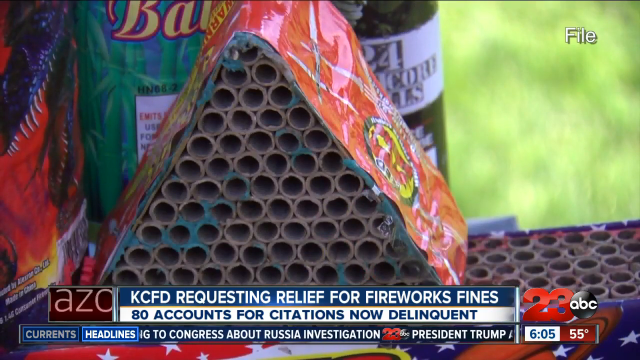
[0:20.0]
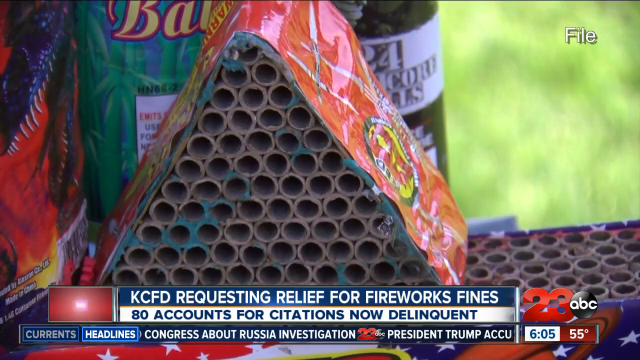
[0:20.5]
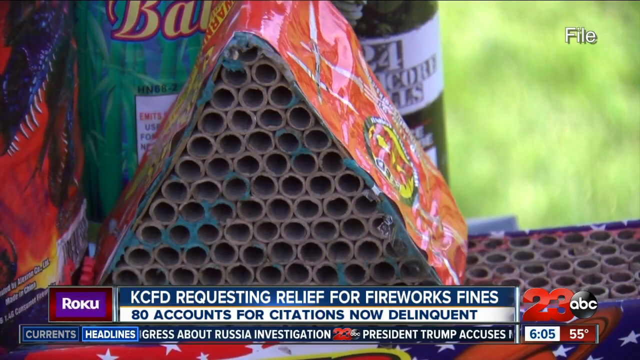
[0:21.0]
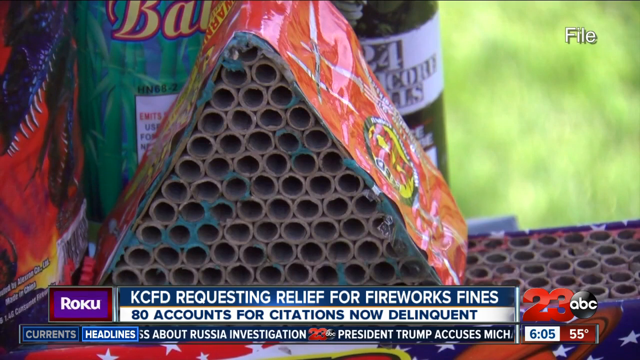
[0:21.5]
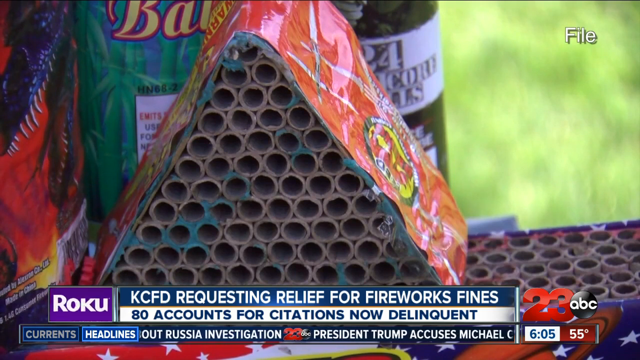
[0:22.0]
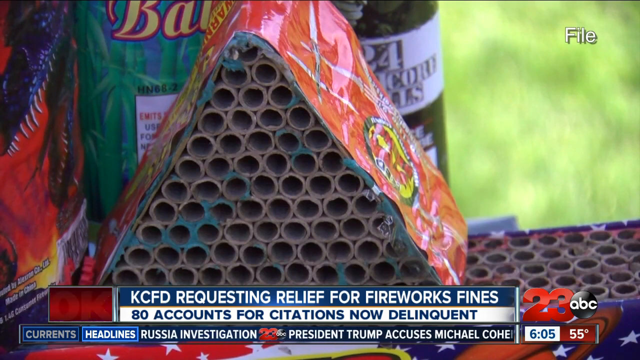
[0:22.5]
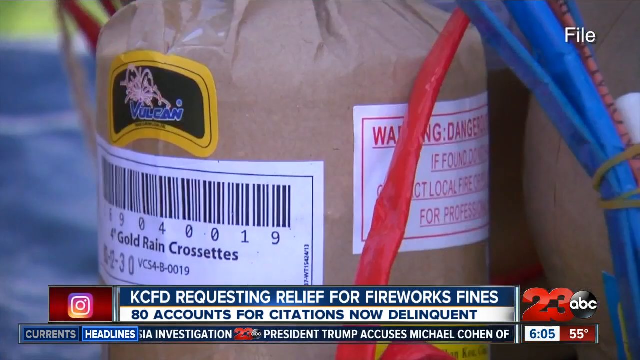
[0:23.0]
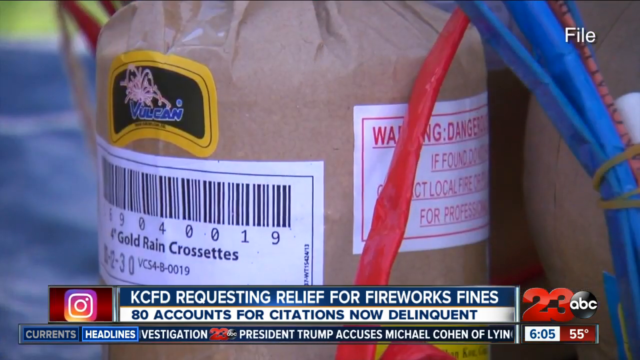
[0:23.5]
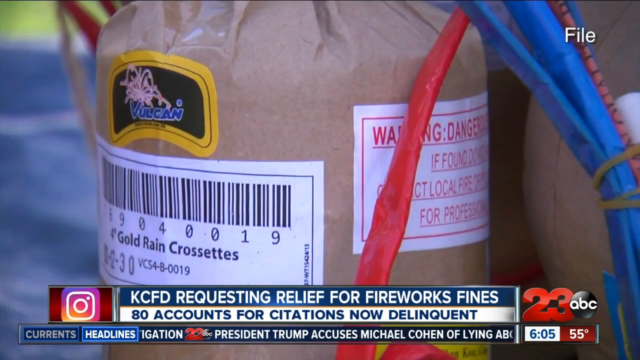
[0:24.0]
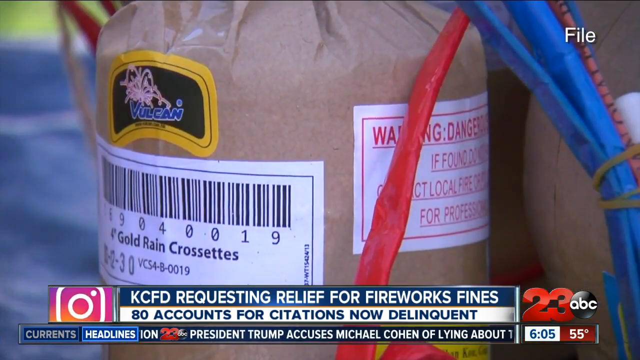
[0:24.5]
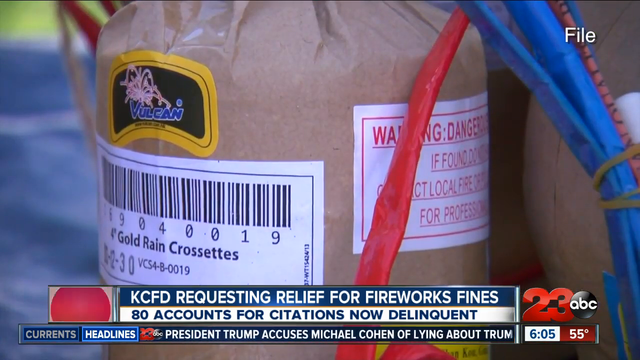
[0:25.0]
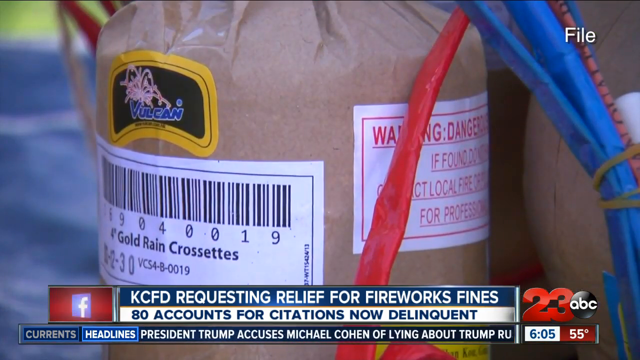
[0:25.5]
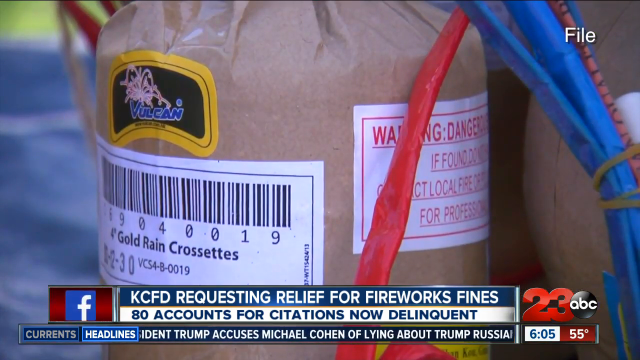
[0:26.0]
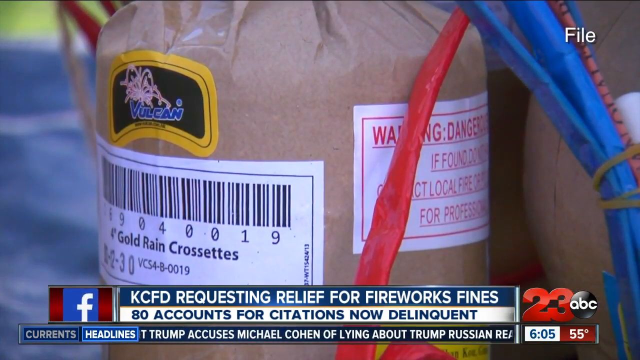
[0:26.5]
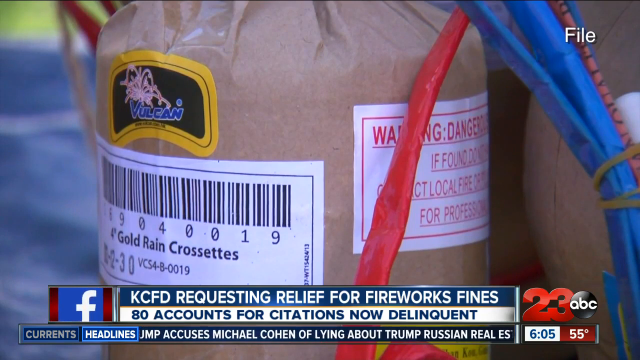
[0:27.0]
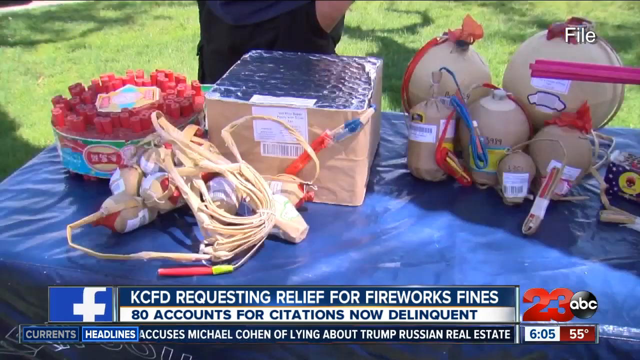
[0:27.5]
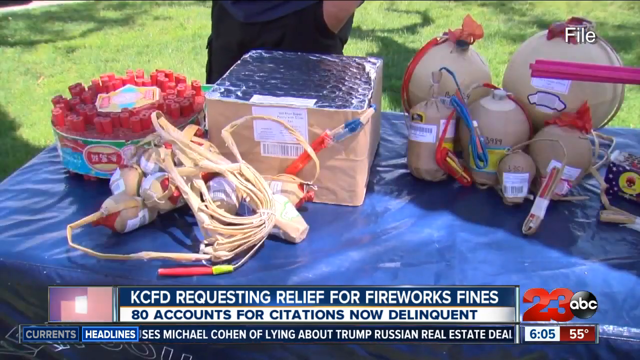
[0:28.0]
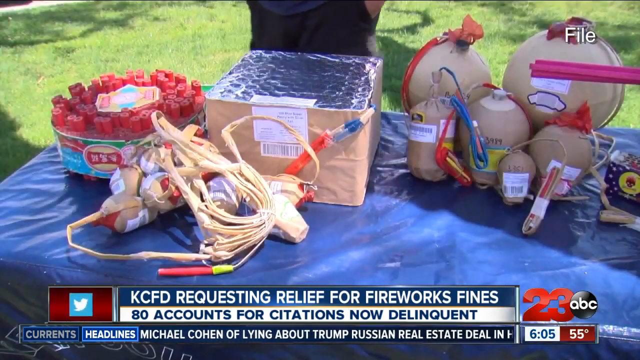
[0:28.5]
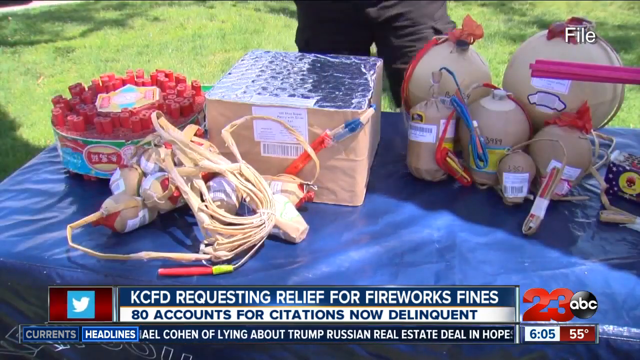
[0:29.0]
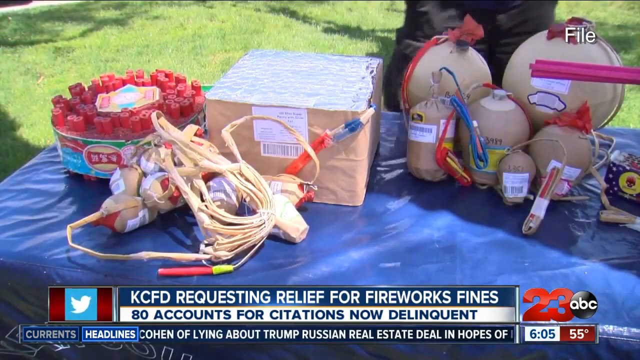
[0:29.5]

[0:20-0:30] The news segment from ABC 23 Bakersfield concerns a request for relief for firework fines, with 80 counts of citations now delinquent.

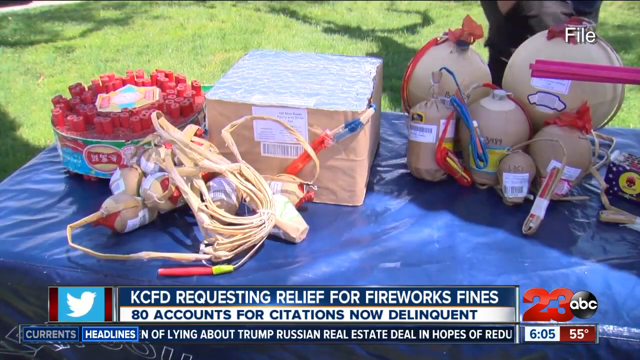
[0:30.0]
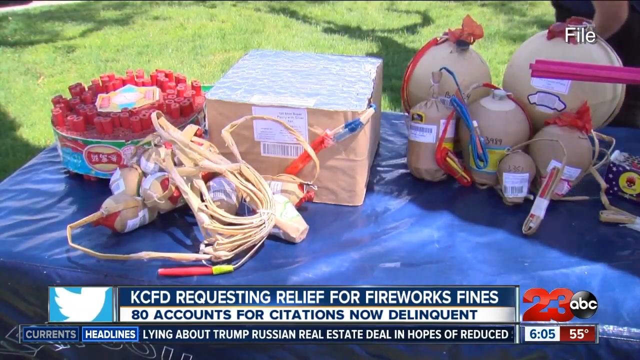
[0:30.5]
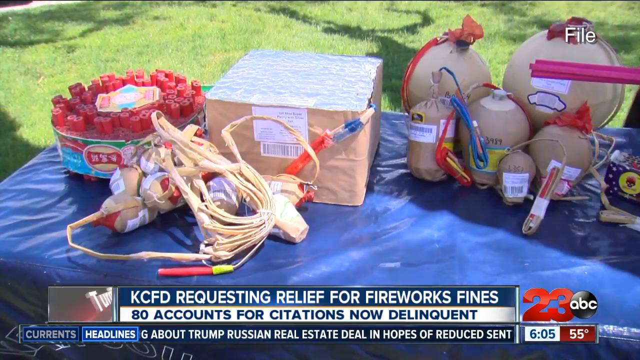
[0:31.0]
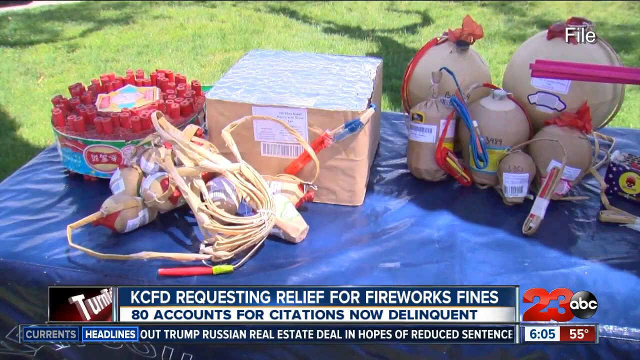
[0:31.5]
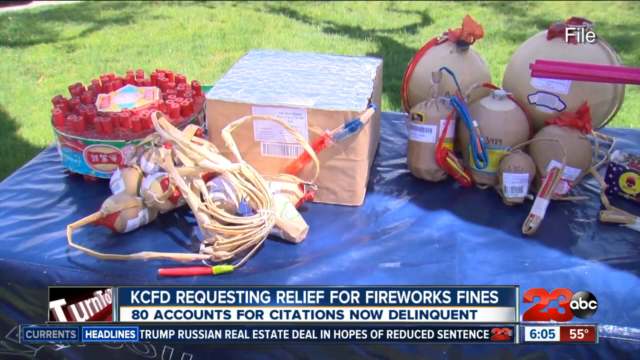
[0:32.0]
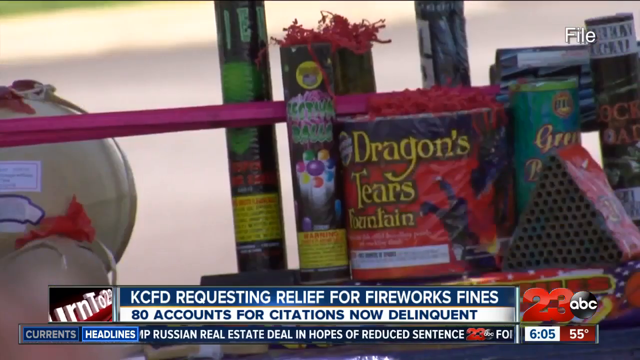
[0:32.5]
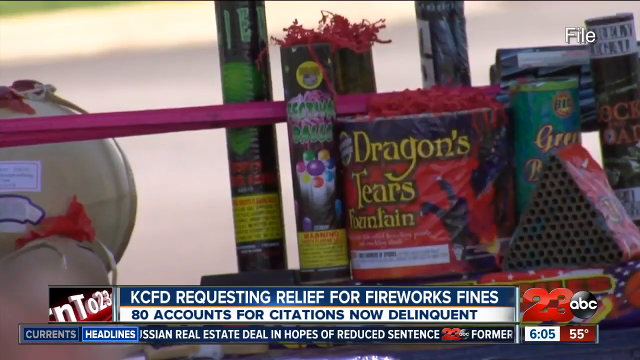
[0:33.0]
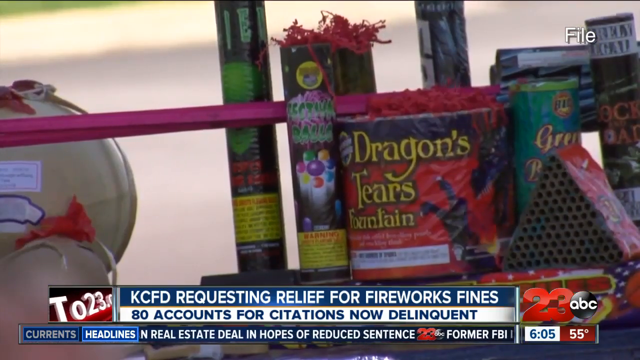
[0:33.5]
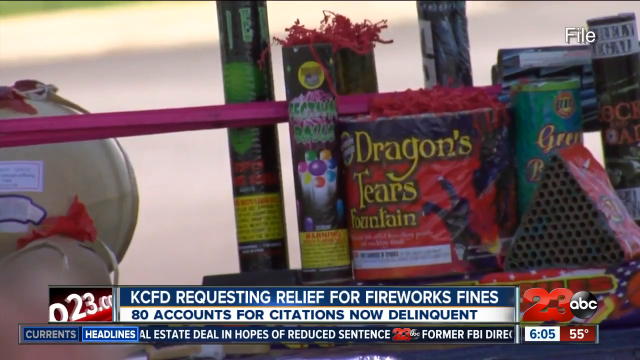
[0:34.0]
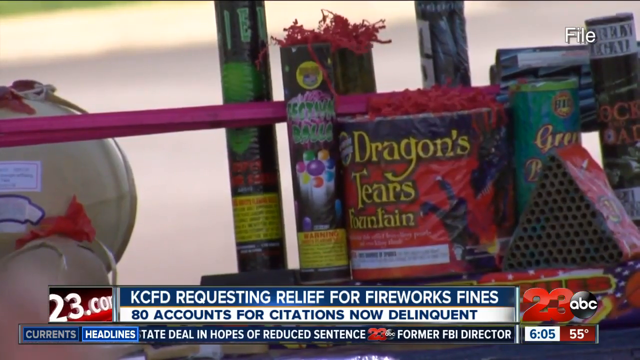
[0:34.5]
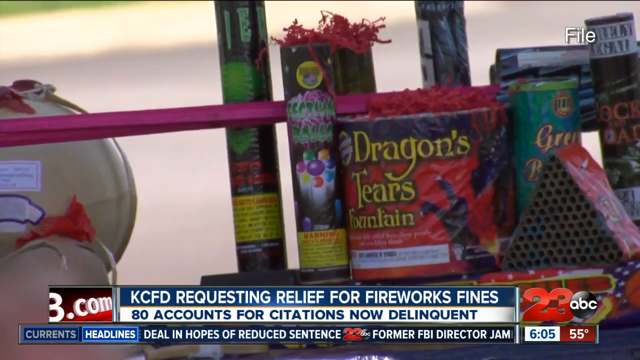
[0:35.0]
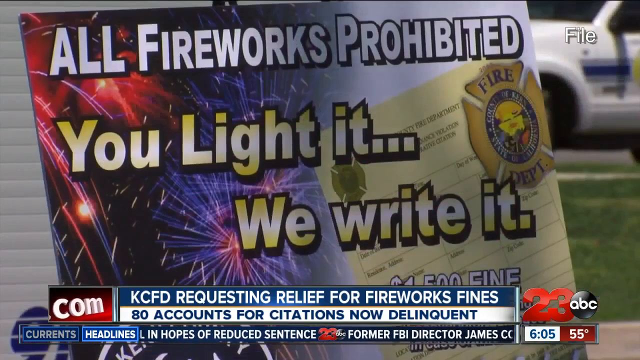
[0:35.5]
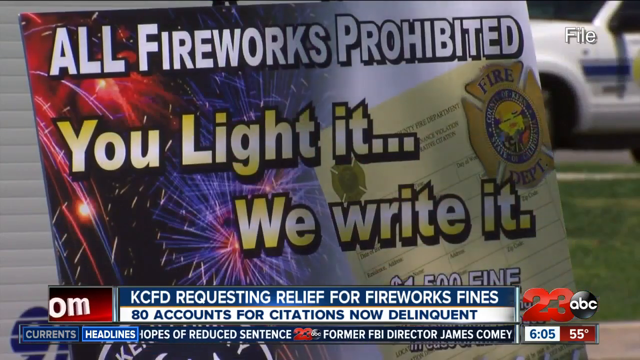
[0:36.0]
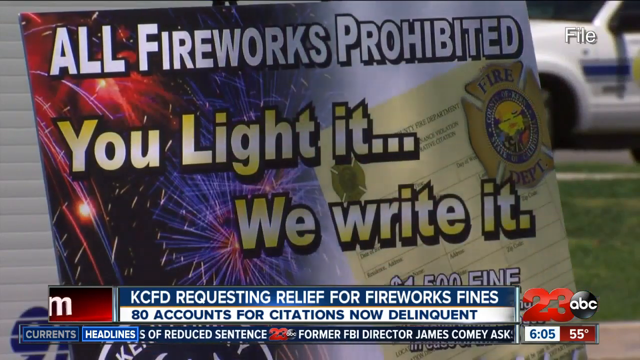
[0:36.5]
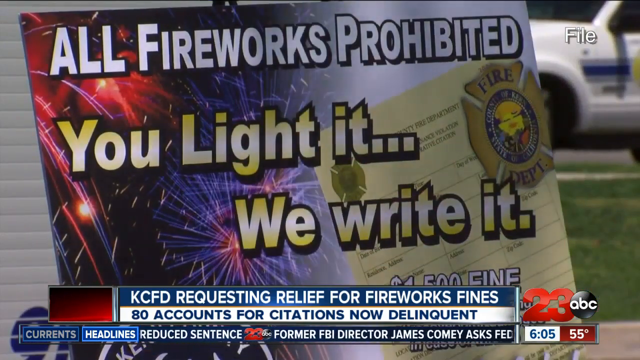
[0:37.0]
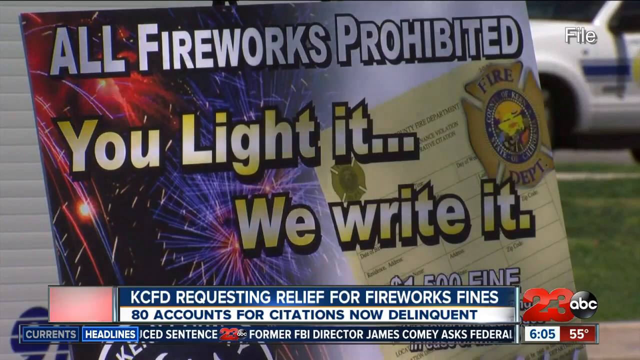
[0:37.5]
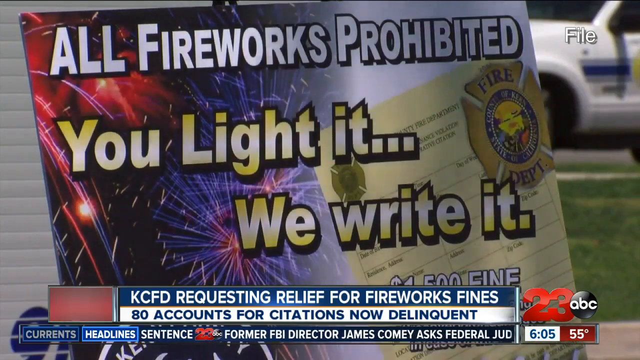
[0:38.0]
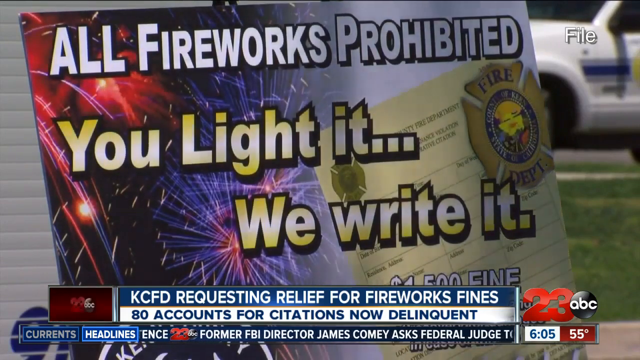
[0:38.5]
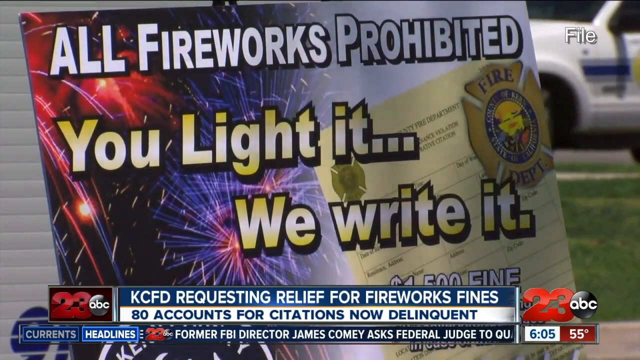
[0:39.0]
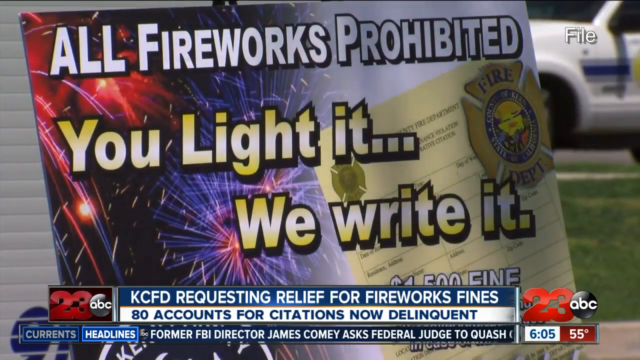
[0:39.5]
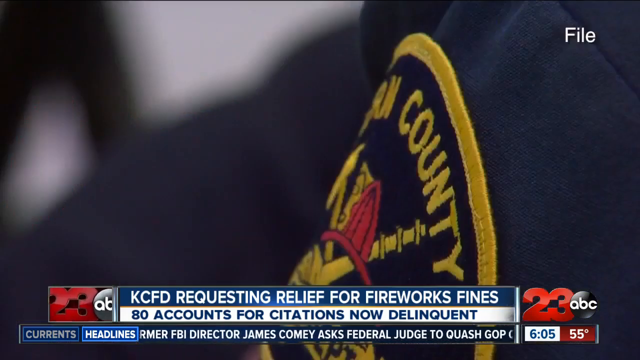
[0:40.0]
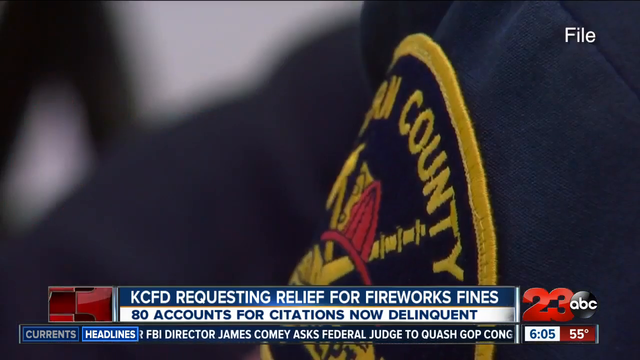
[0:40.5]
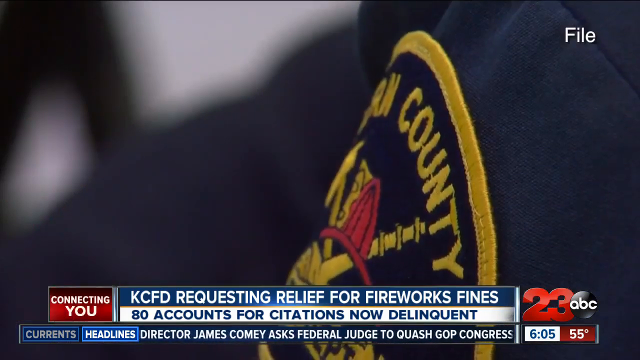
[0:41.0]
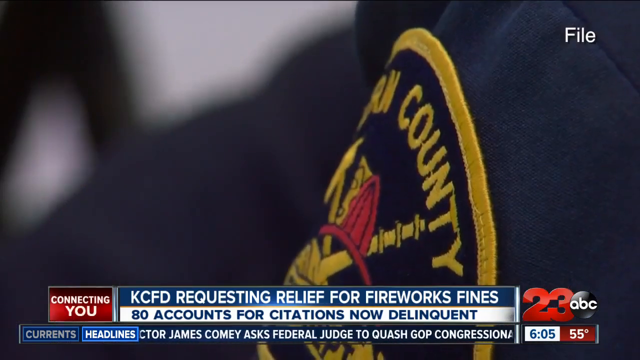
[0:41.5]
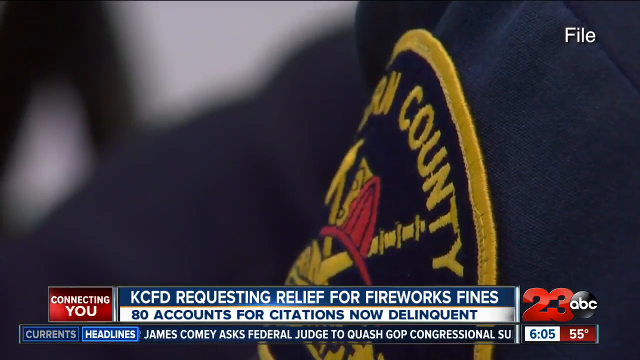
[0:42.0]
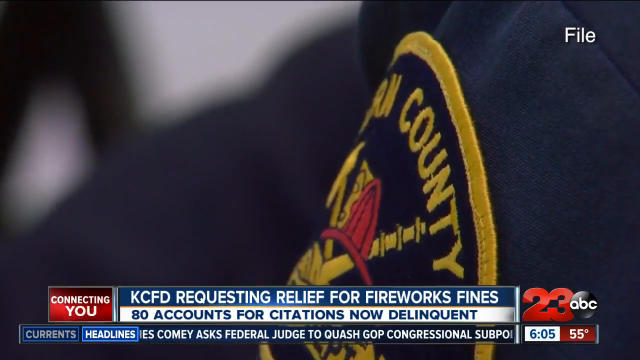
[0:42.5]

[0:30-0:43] A couple of different fireworks are shown, including repeaters and other types of fireworks. A woman with dark hair, wearing a dark dress with white circles, is explaining.